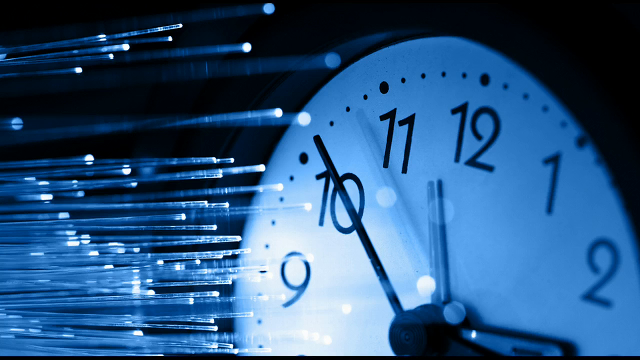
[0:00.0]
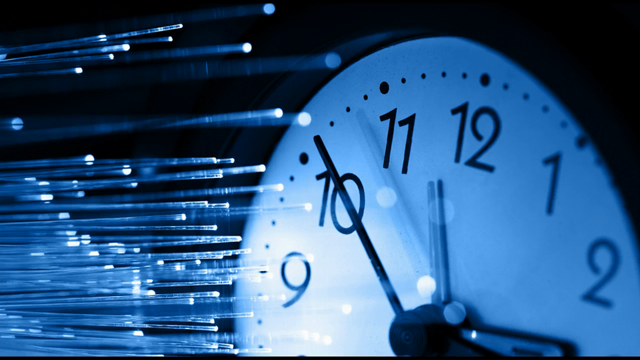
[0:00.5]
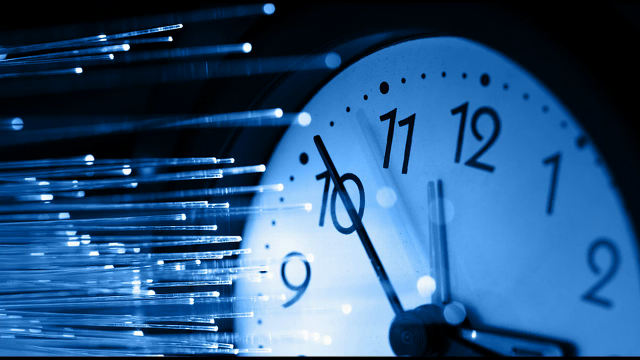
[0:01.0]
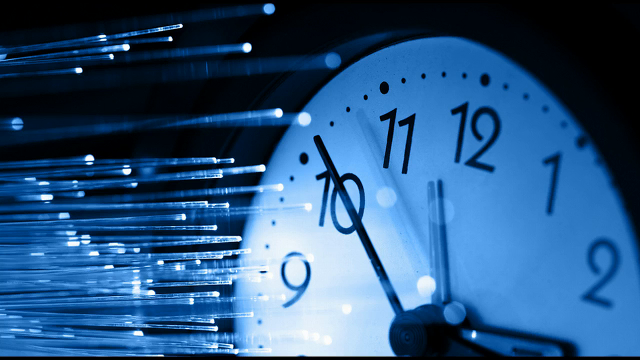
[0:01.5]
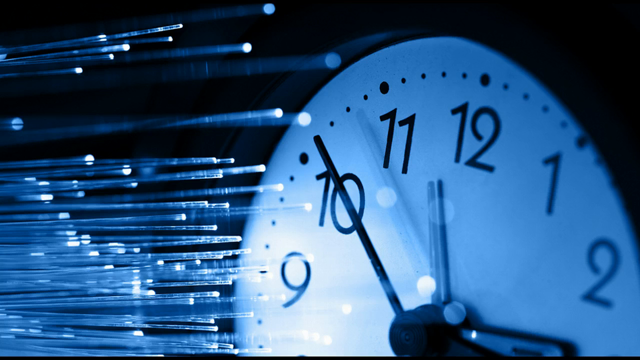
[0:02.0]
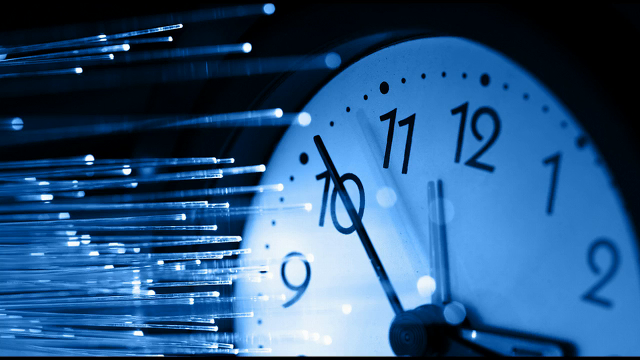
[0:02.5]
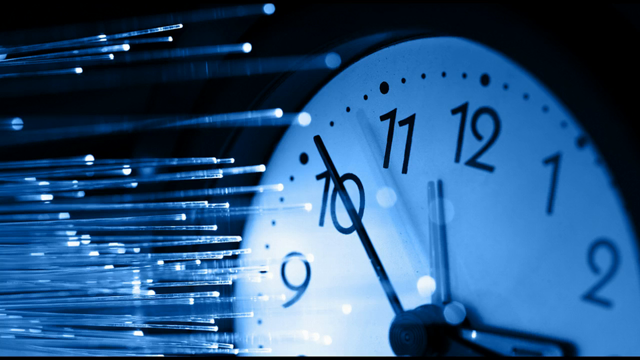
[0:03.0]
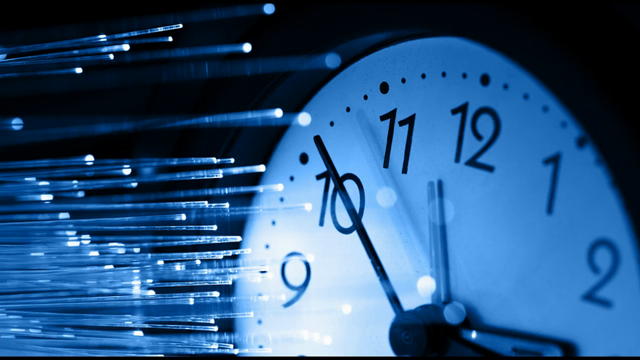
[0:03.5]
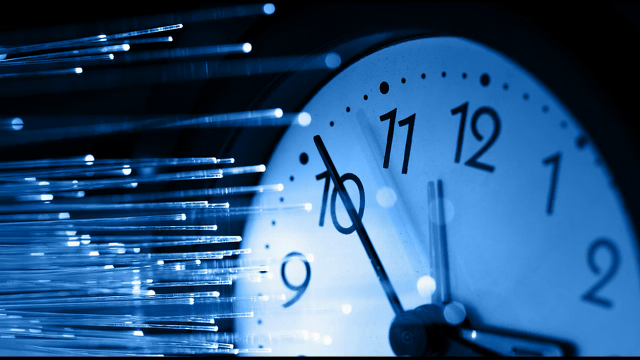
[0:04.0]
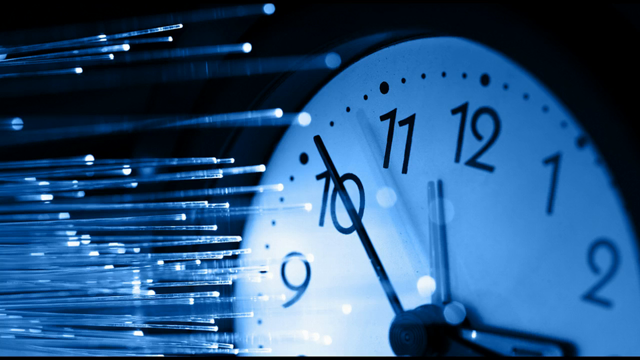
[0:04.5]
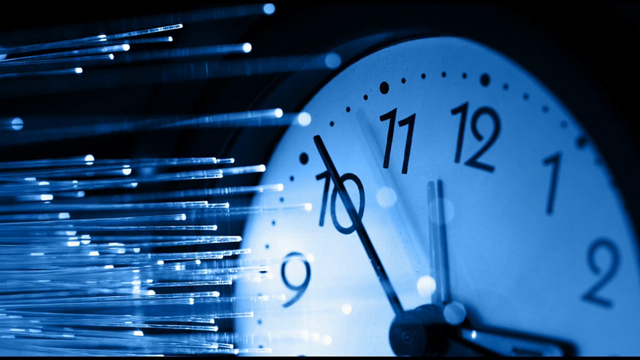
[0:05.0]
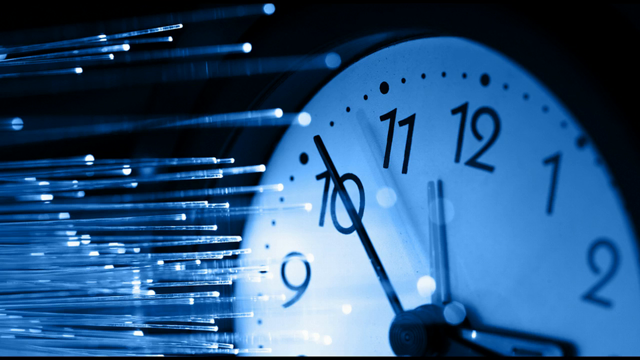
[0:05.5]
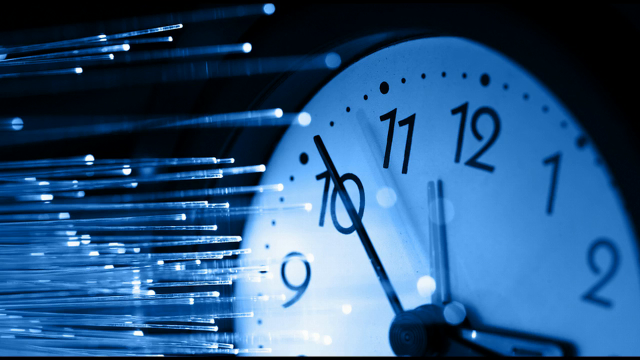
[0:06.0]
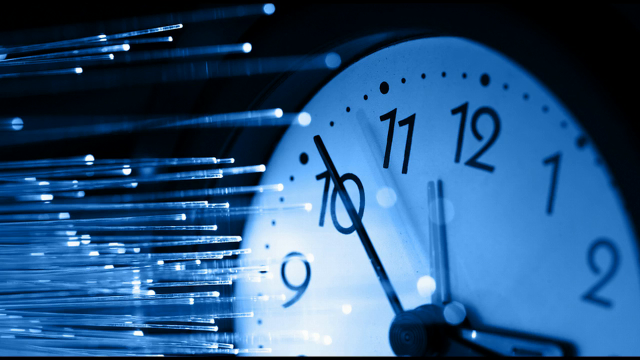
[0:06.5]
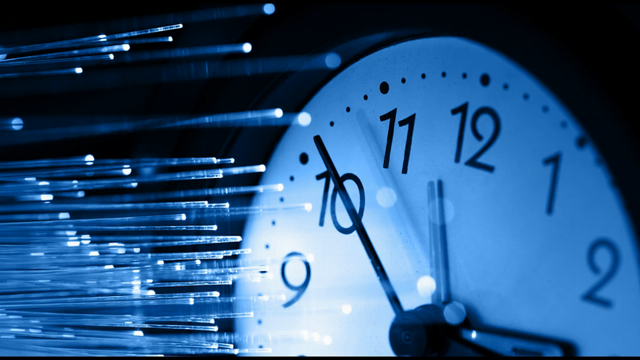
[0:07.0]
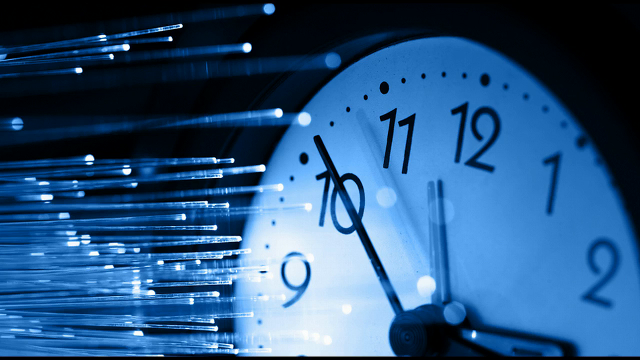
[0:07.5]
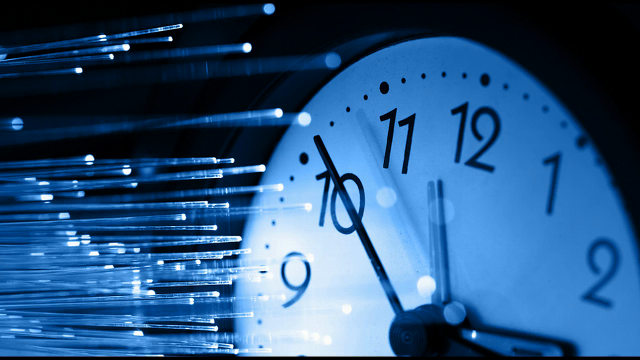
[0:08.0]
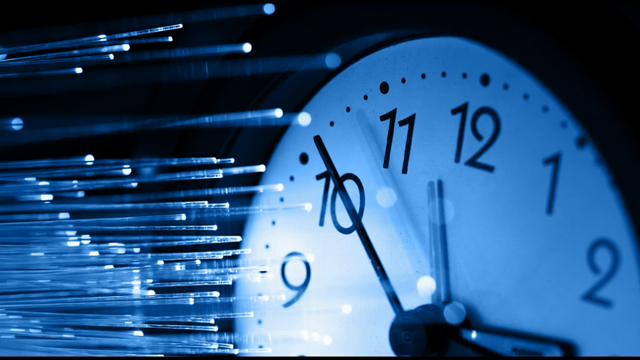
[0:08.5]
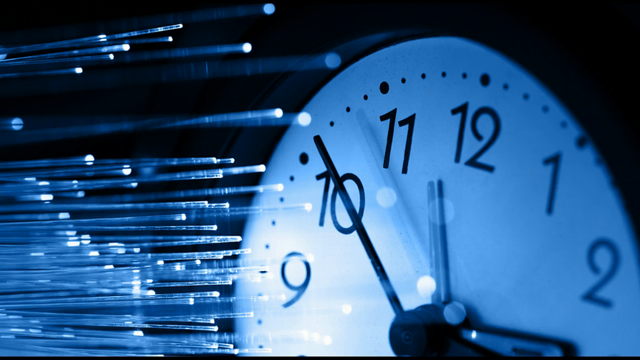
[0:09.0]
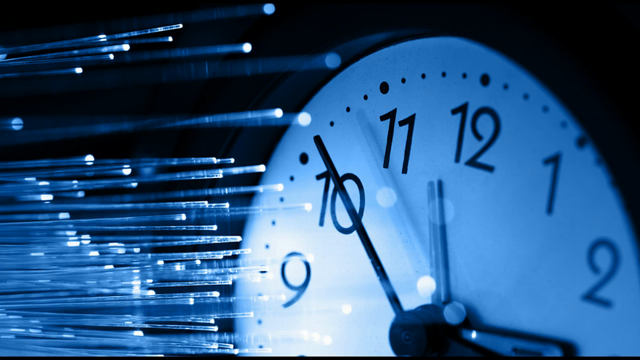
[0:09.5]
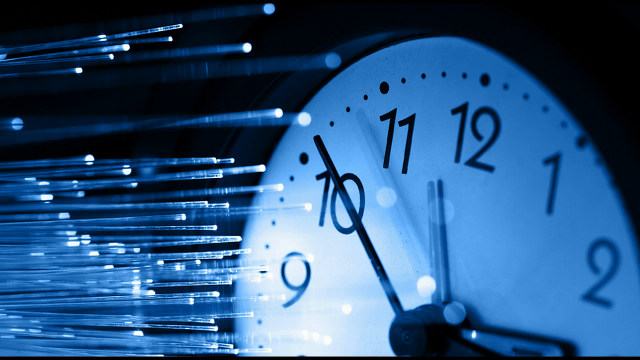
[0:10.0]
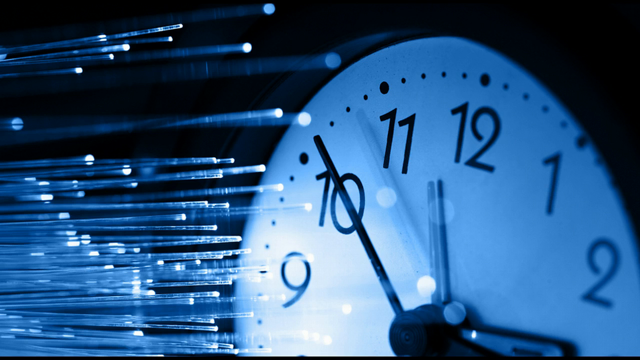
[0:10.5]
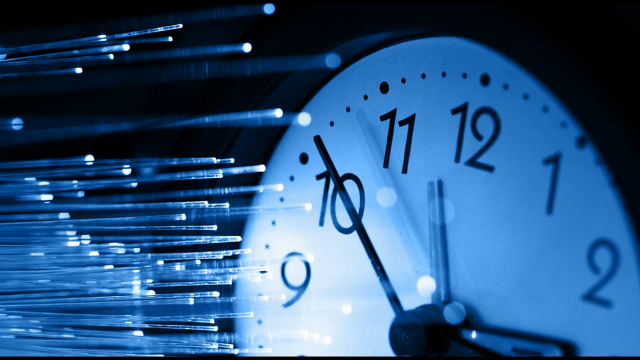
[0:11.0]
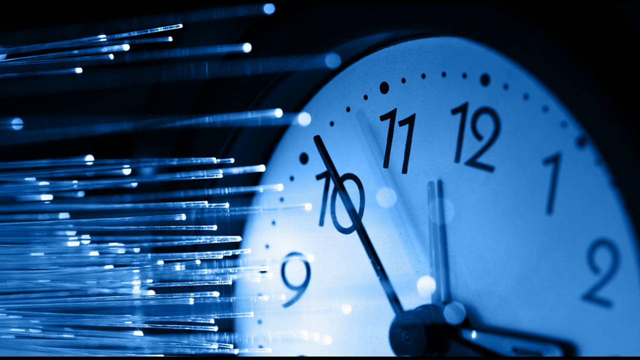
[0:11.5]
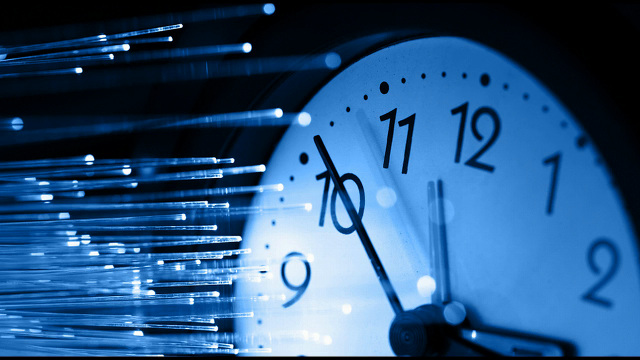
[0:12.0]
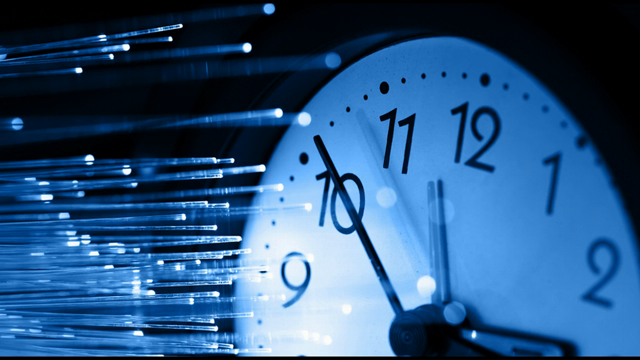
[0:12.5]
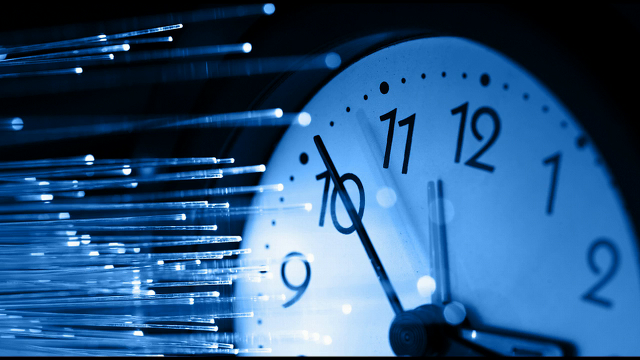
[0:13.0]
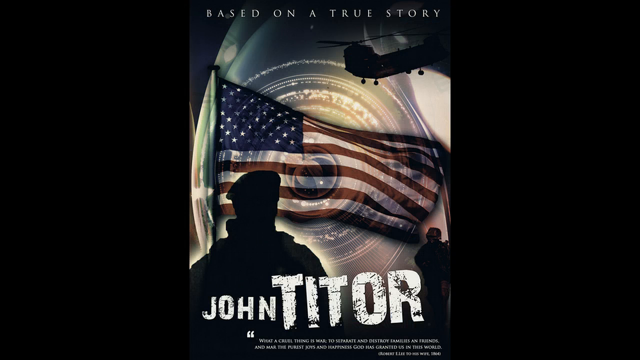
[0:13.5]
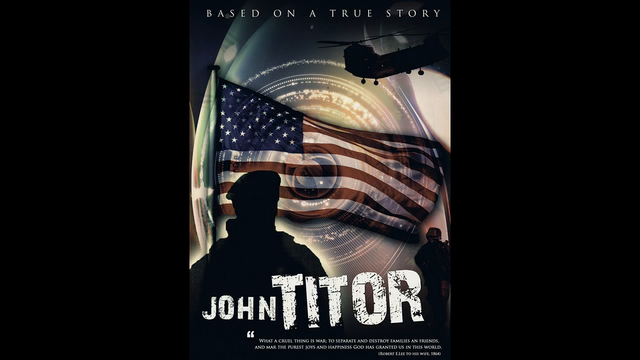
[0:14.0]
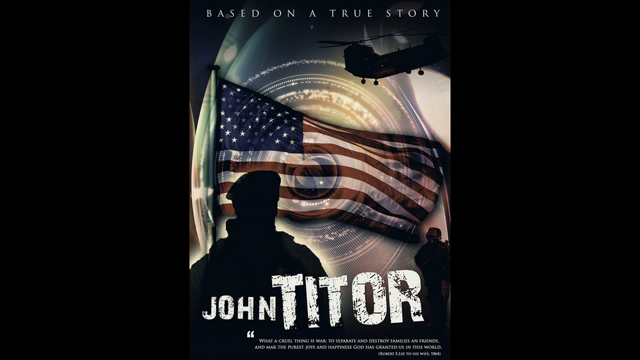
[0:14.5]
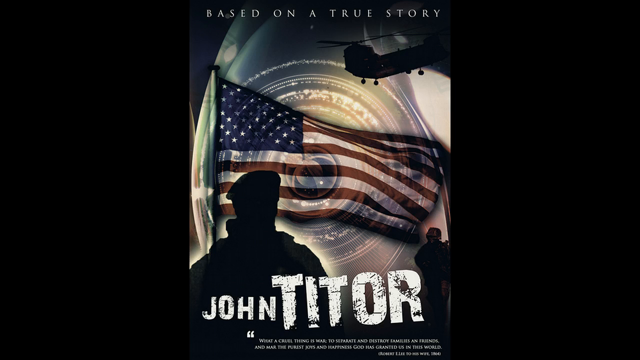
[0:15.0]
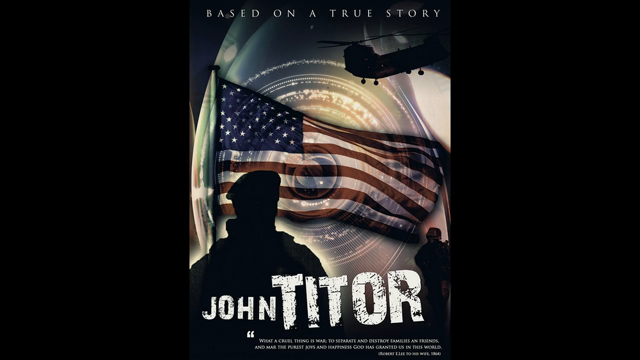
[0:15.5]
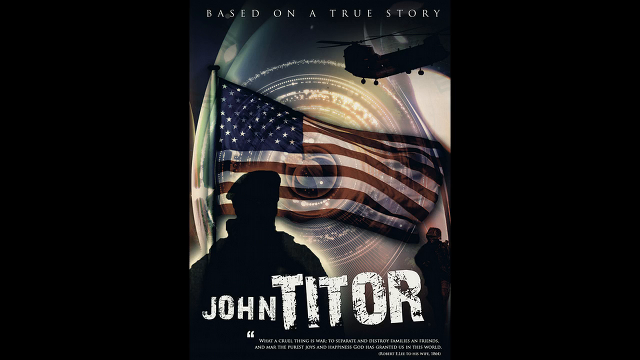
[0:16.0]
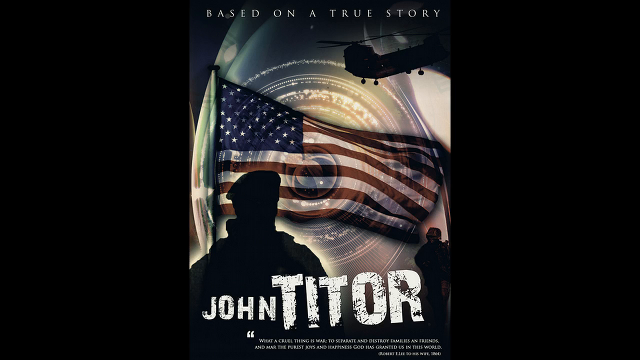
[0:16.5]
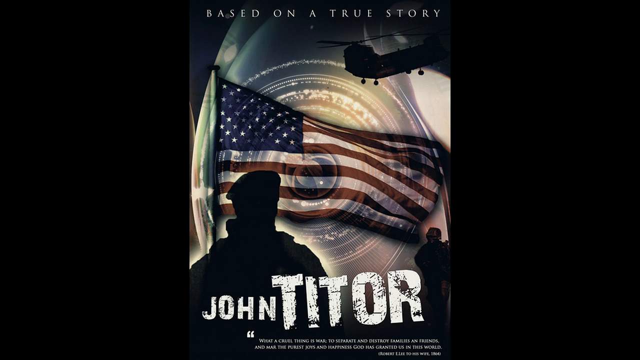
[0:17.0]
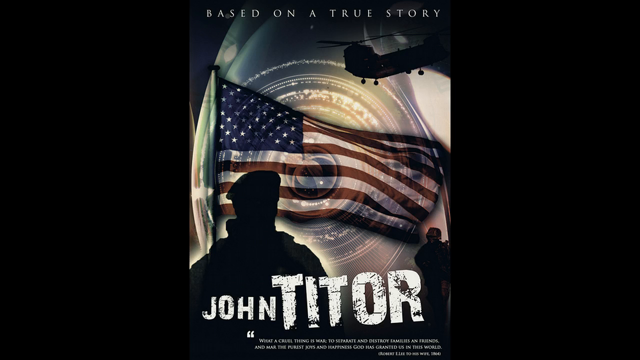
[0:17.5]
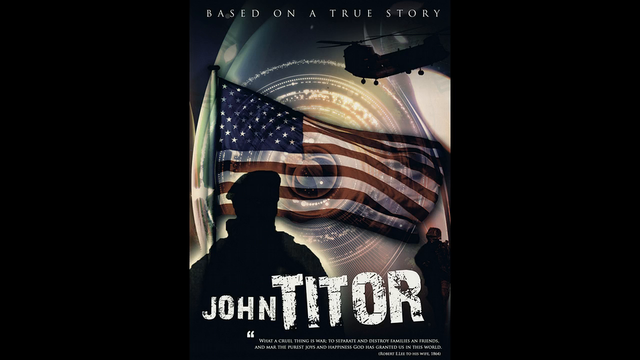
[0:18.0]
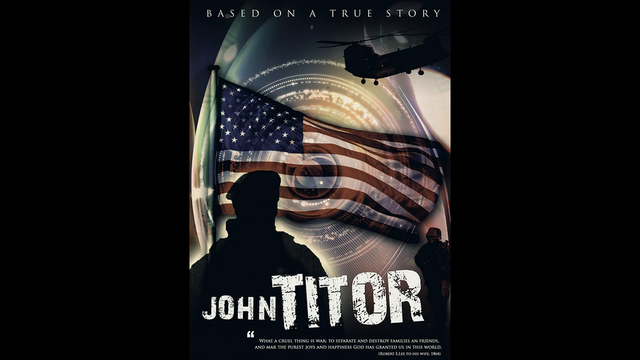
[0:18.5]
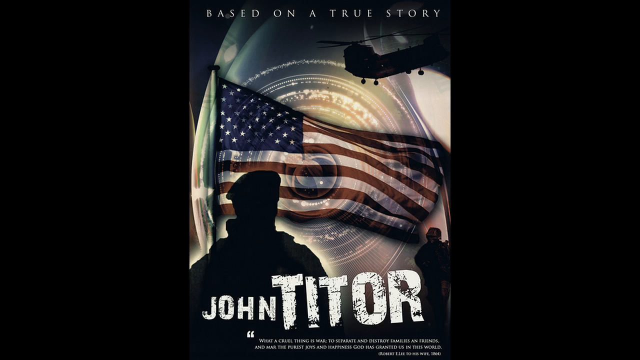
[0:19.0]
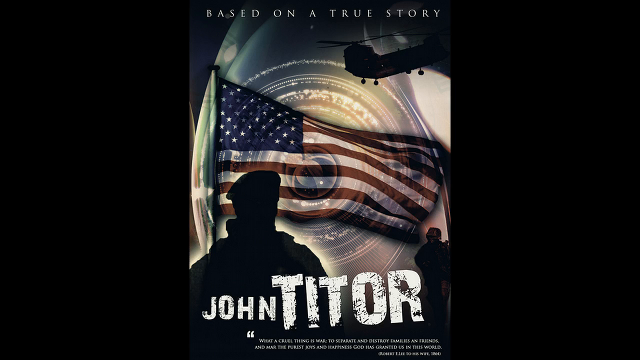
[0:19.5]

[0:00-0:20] A graphic of a clock approaching 12 appears in blue and white, with small white strands that look somewhat like wires running through the image. The long hand of the clock points at 10. After about 10 to 12 seconds, a new image titled "Based on a True Story" by John Titor appears. It shows an American flag with a soldier in a beret and what looks like a helicopter able to carry many soldiers. The image then stays still. In the middle of the flag there seems to be a camera of some sort, with camera features and lenses, and the image might be a poster for a movie.